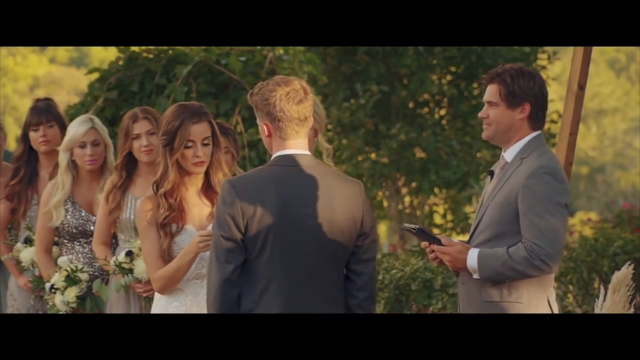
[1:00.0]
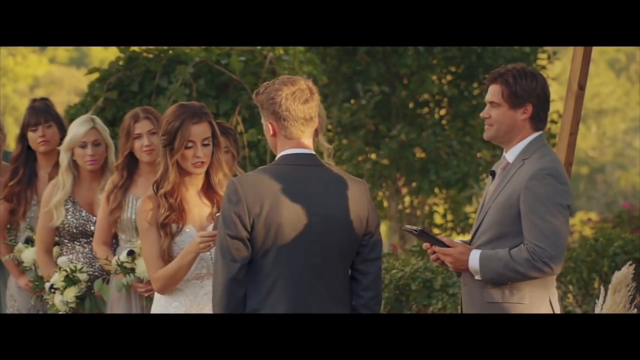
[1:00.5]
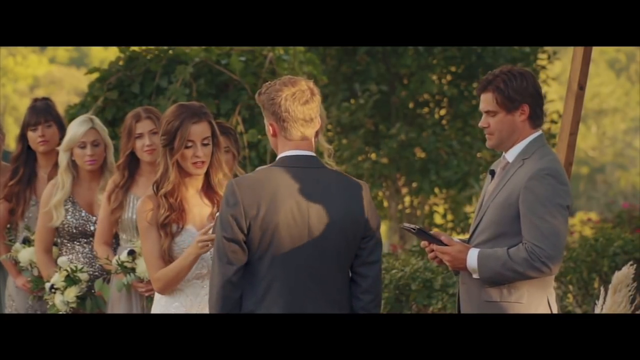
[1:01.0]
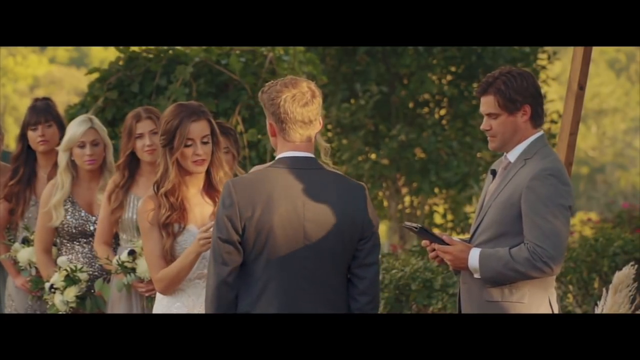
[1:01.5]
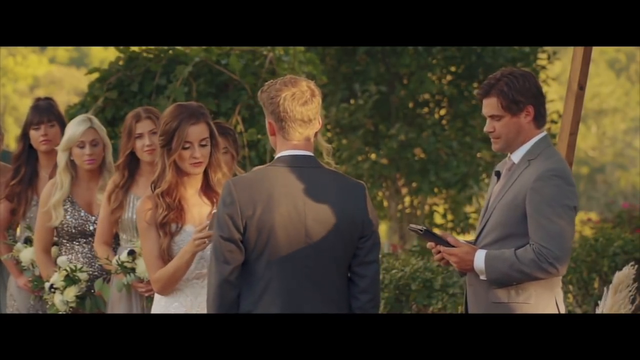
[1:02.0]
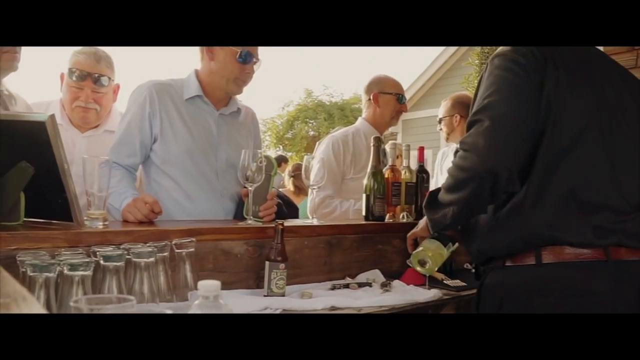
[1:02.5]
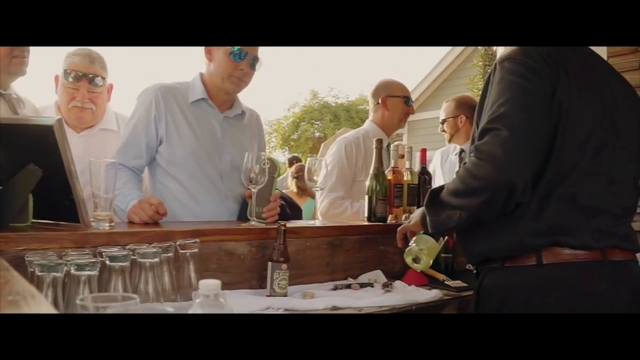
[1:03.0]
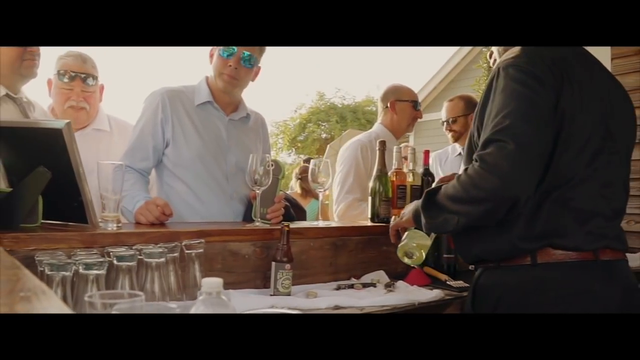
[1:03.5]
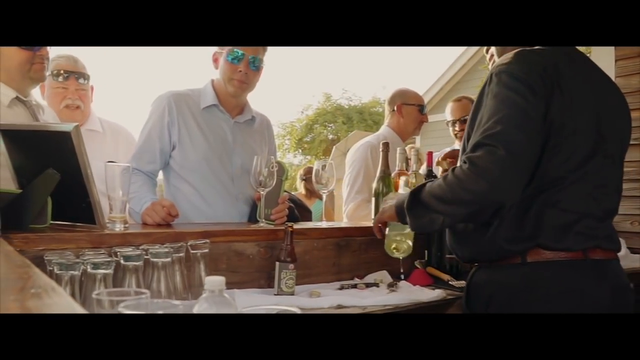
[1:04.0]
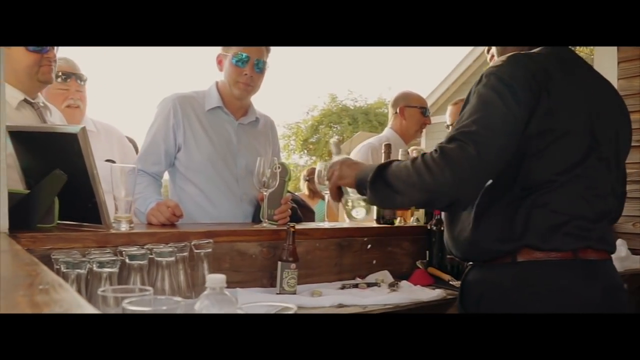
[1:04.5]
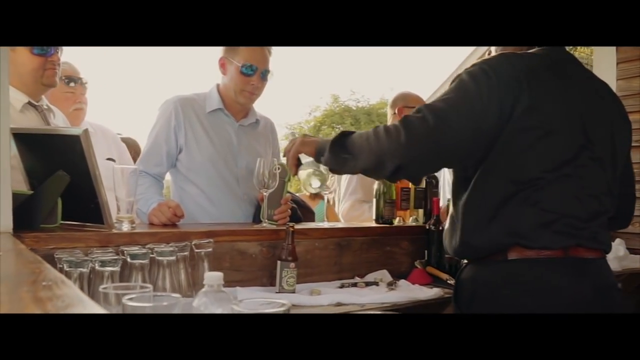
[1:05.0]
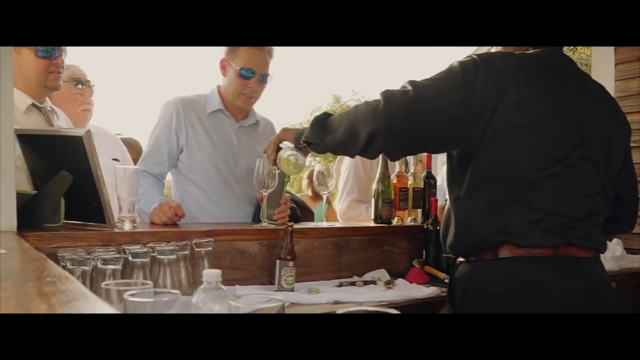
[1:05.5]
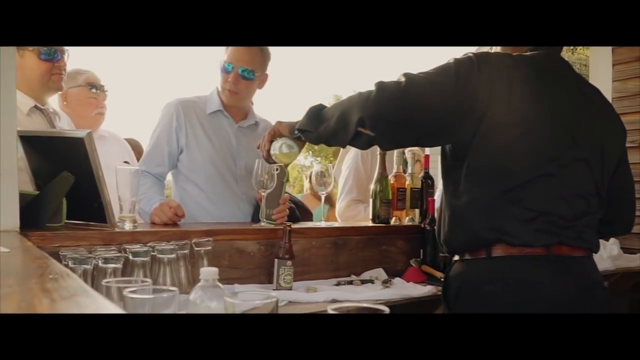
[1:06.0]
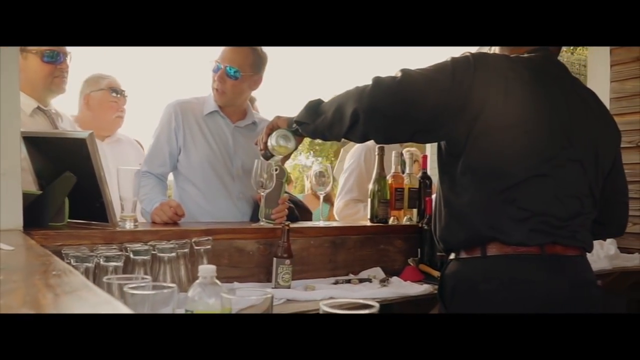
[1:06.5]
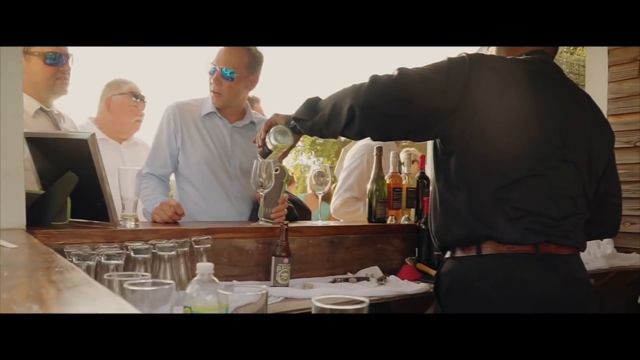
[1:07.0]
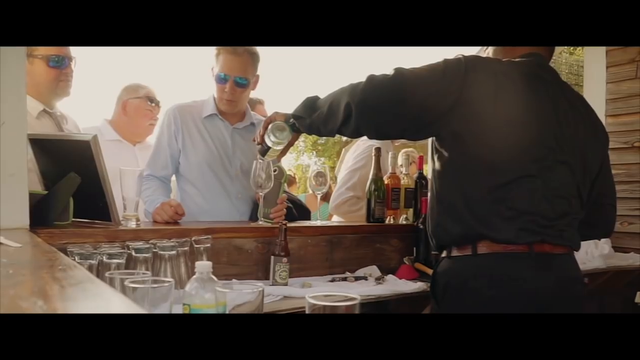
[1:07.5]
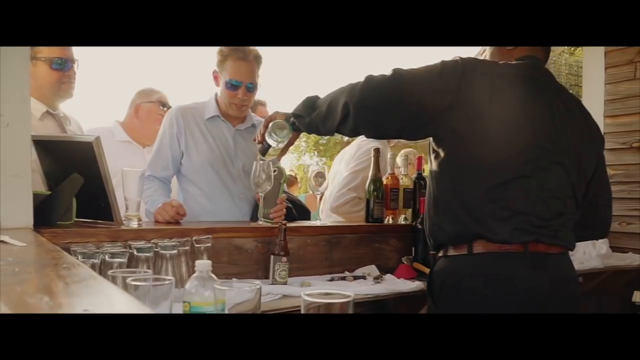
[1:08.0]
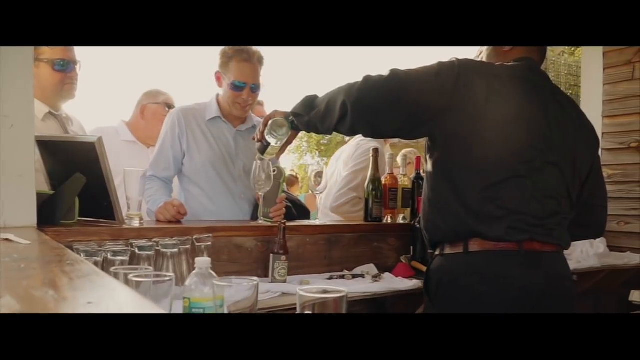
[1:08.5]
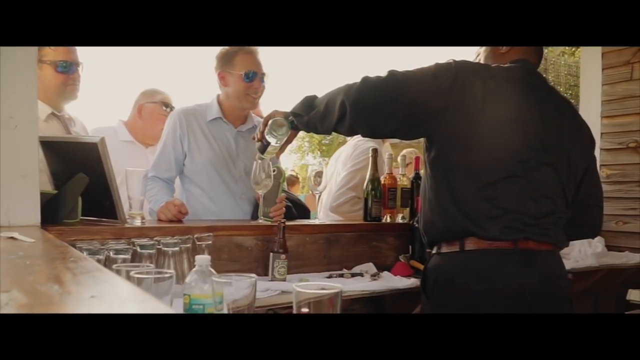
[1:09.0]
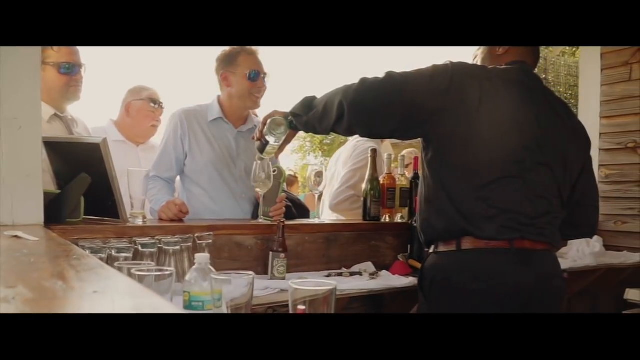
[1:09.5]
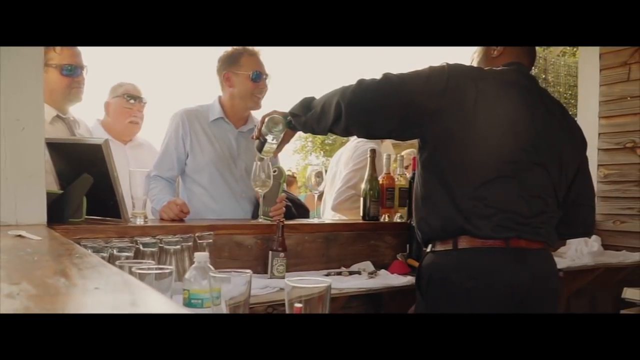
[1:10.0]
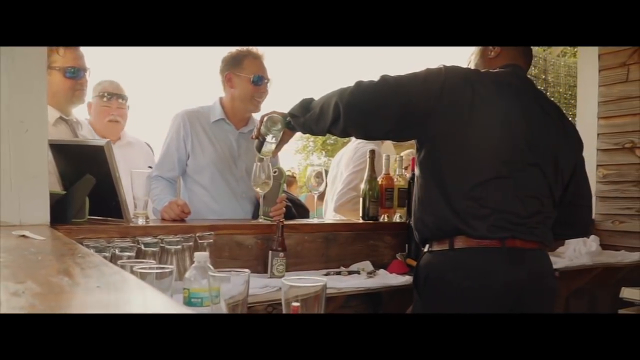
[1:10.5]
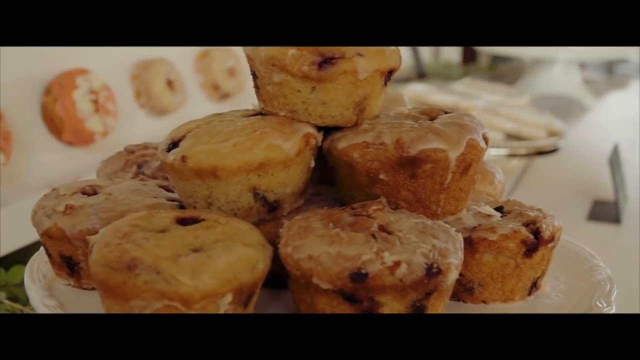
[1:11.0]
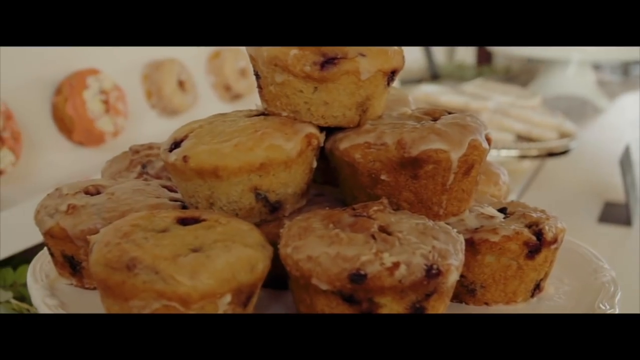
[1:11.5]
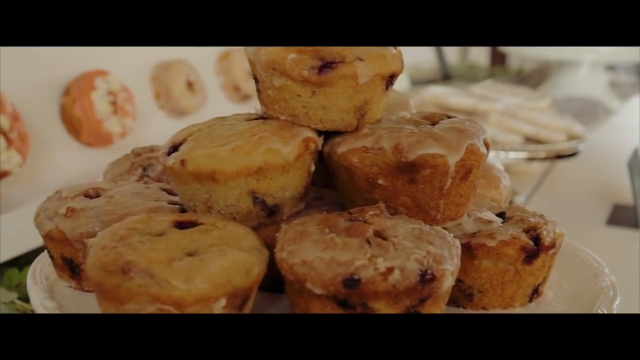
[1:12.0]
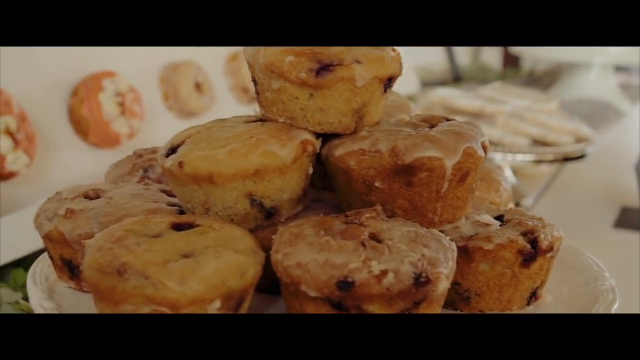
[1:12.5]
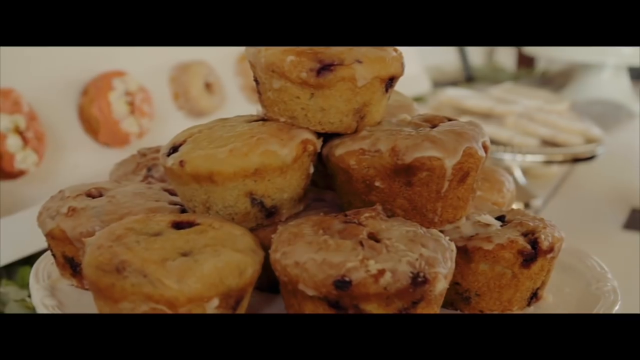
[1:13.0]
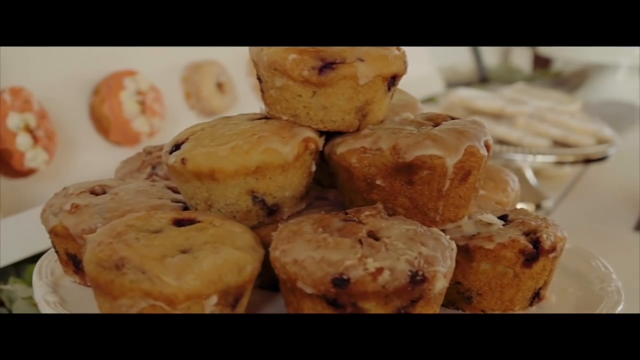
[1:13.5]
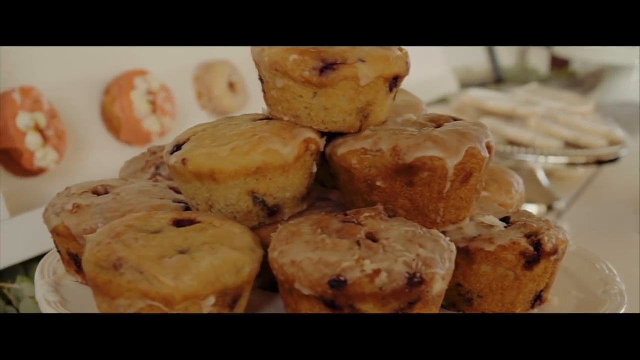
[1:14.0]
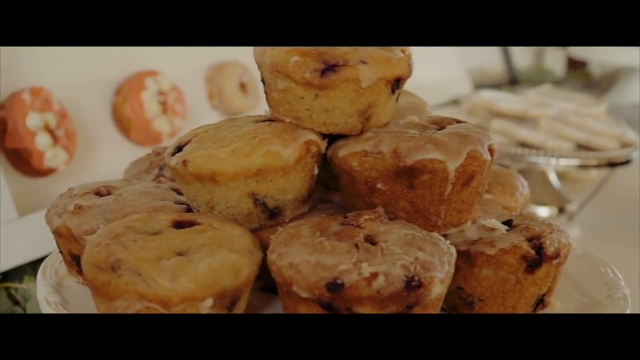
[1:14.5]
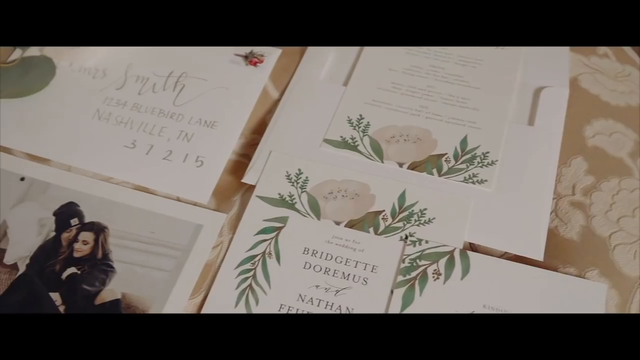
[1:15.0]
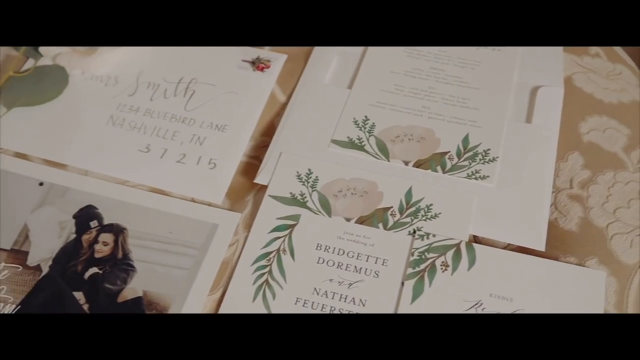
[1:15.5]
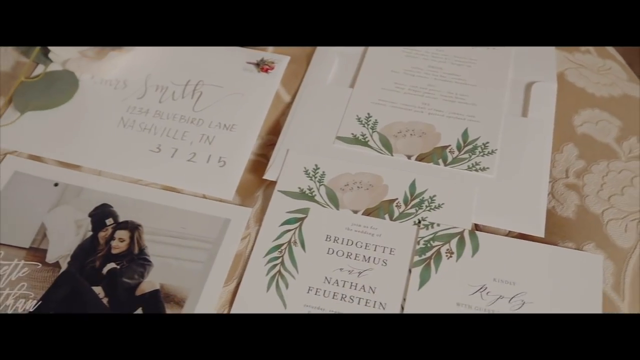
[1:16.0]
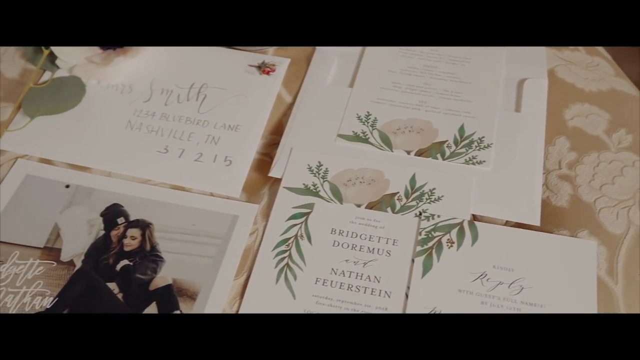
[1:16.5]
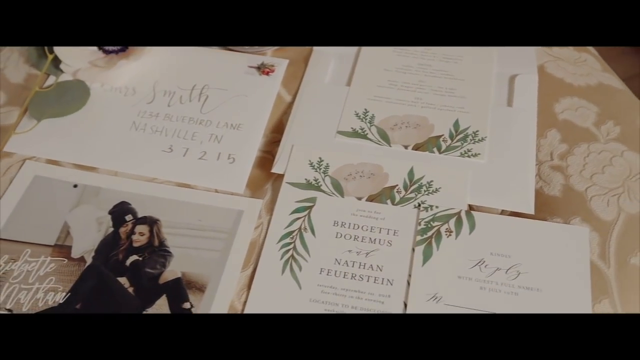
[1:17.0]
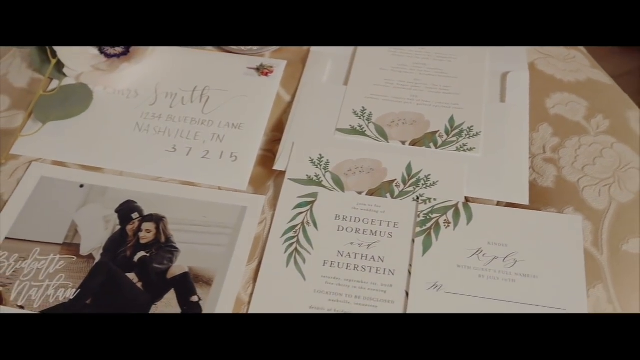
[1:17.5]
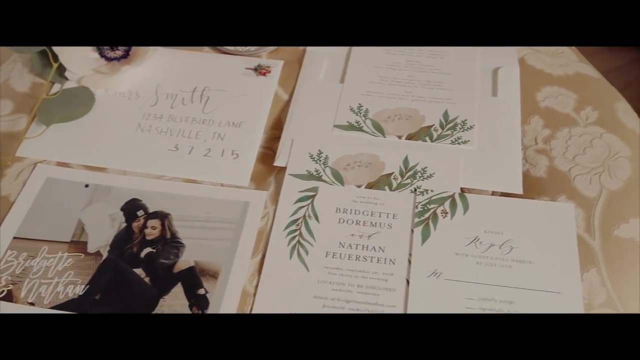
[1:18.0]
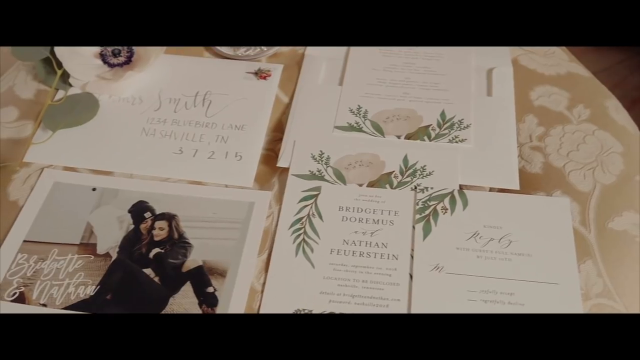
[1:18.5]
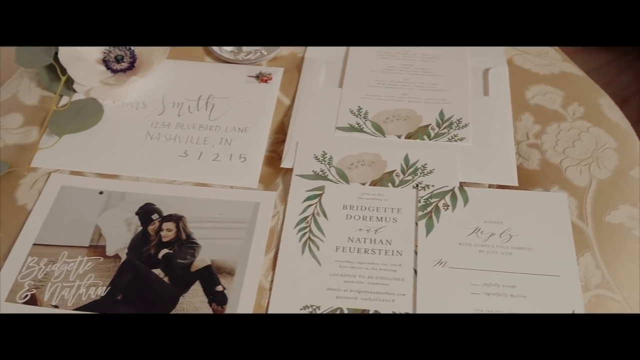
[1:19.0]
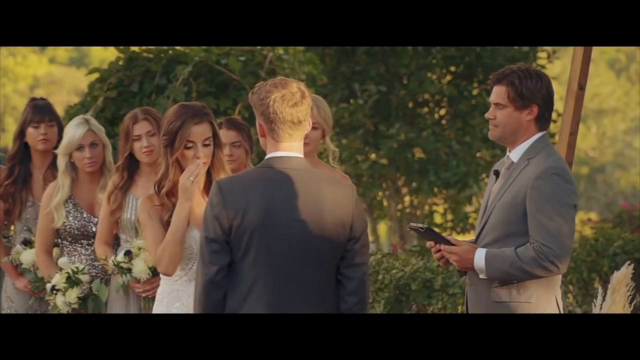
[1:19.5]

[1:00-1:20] At the altar, the woman gives her vows. The pastor holds a tablet; he wears a light gray suit with a white shirt and a light gray tie, and he looks towards his tablet. The scene cuts to what looks like the bar, where a man in a long-sleeve blue shirt wears sunglasses with blue reflective lenses. Champagne is poured into a glass. On the table is a glass of beer, and on the right of the table are five bottles of wine, along with around 14 pieces of glass. More men wearing sunglasses appear, and a chubby man moves left and right. Another shot shows cupcakes prepared on a dish, stacked on top of one another, followed by what looks like wedding gift cards on top of what looks like a bed. The scene then returns to the woman reading her vows.